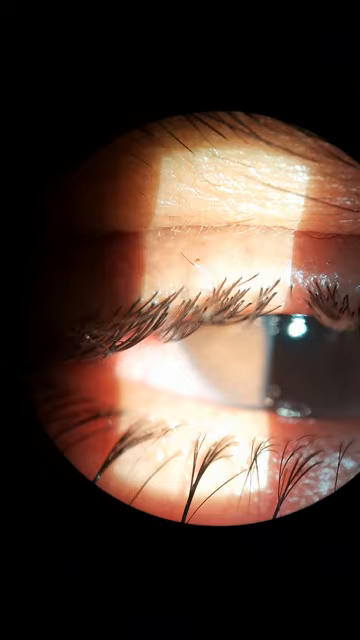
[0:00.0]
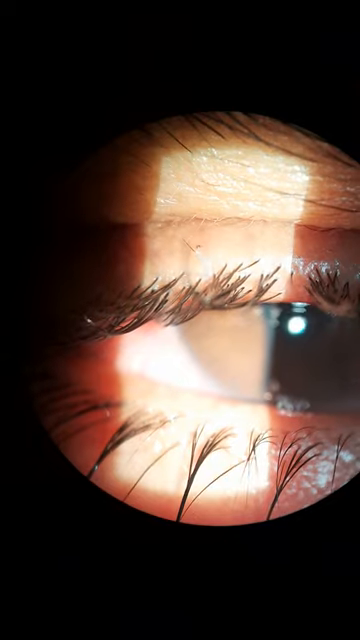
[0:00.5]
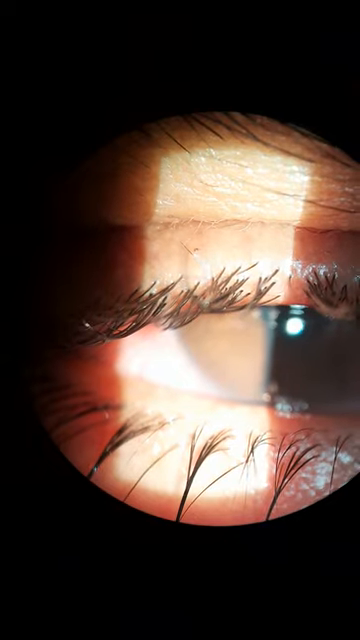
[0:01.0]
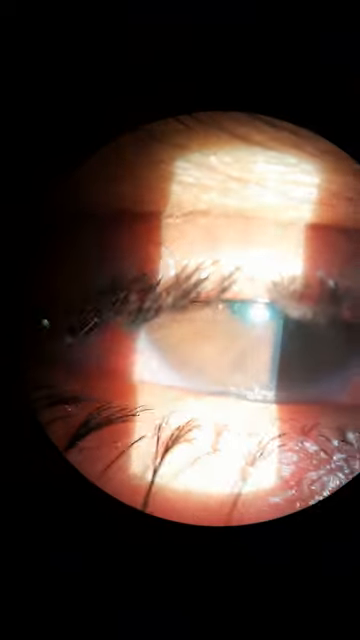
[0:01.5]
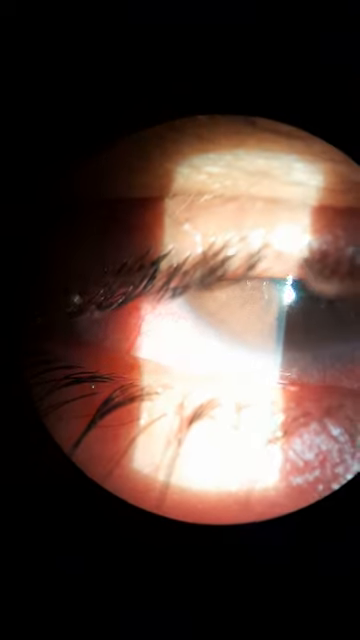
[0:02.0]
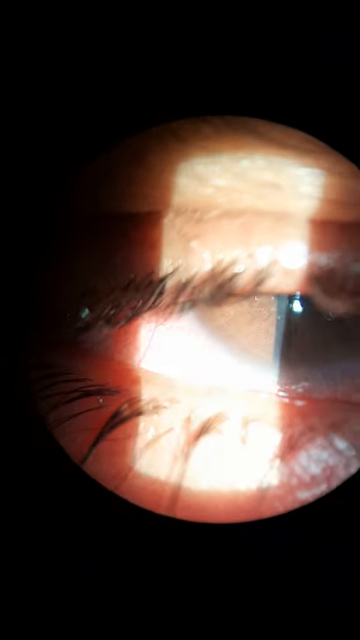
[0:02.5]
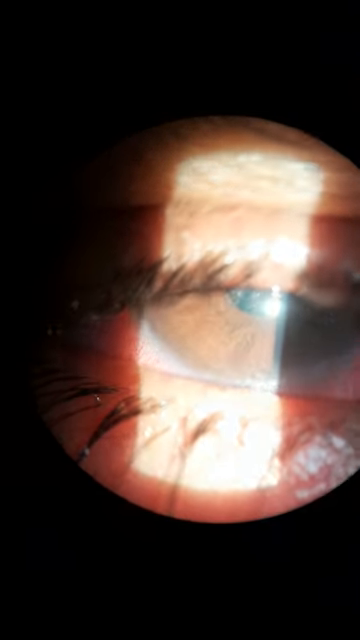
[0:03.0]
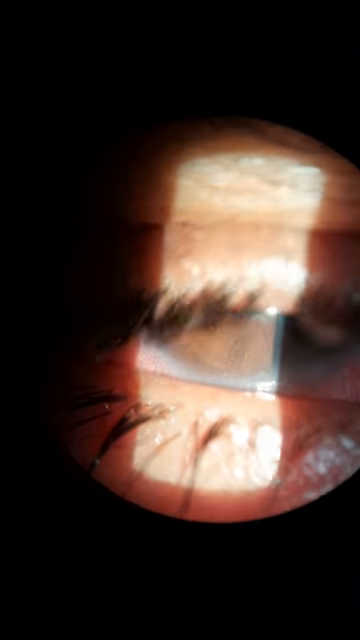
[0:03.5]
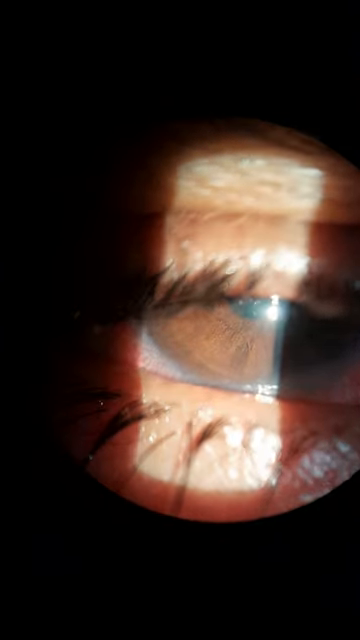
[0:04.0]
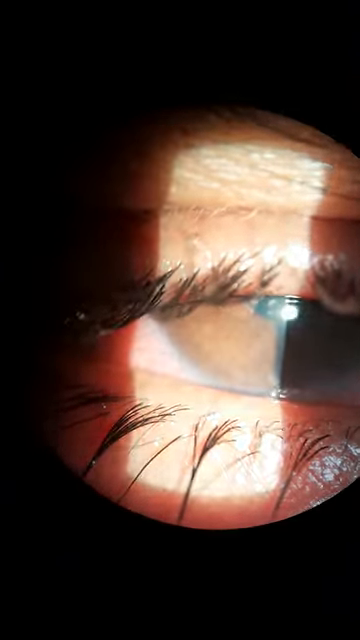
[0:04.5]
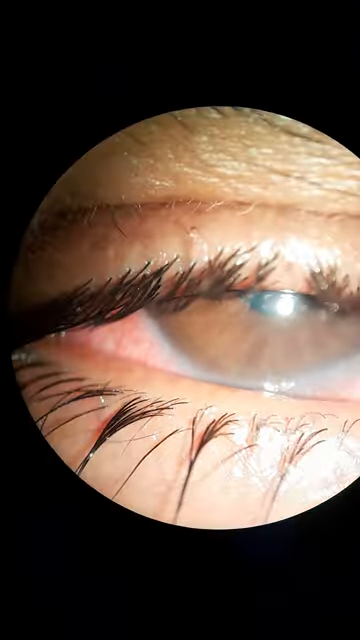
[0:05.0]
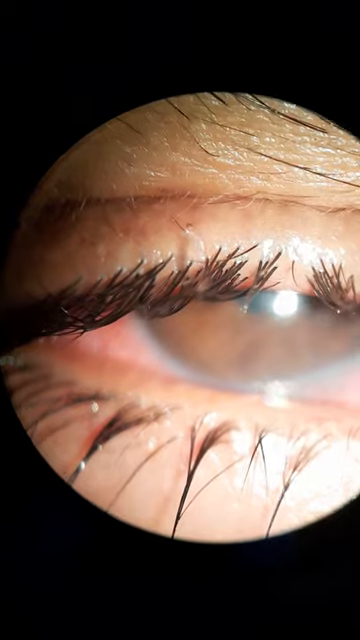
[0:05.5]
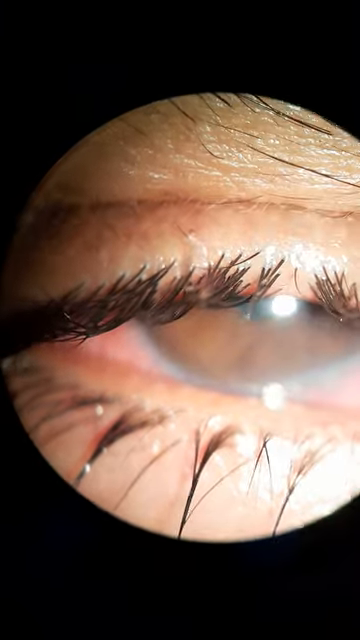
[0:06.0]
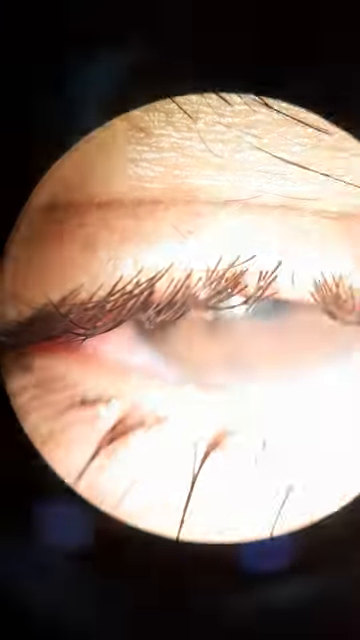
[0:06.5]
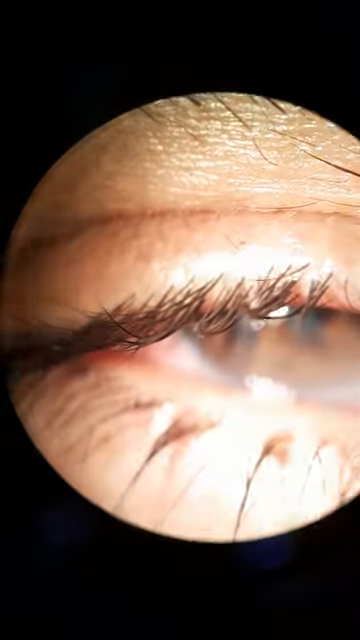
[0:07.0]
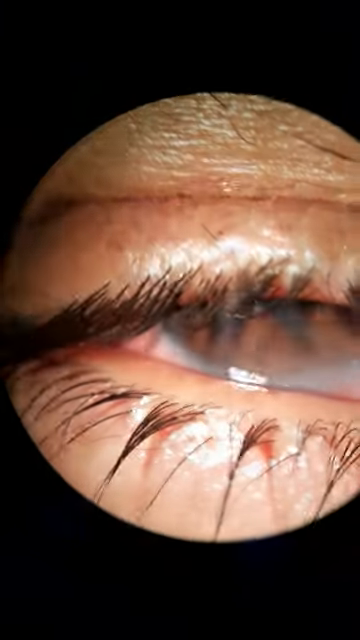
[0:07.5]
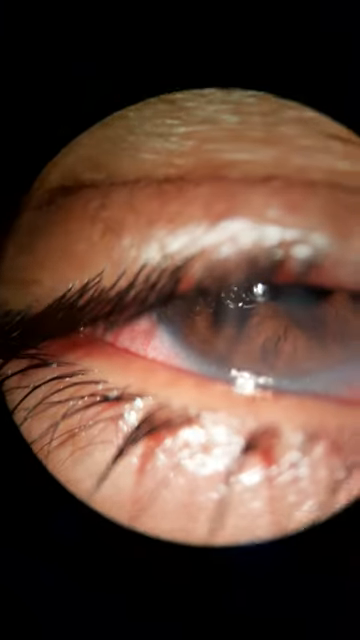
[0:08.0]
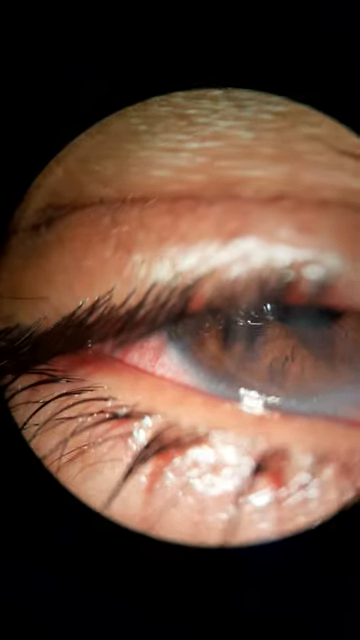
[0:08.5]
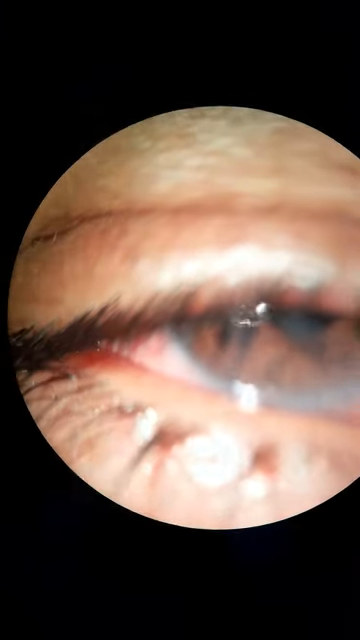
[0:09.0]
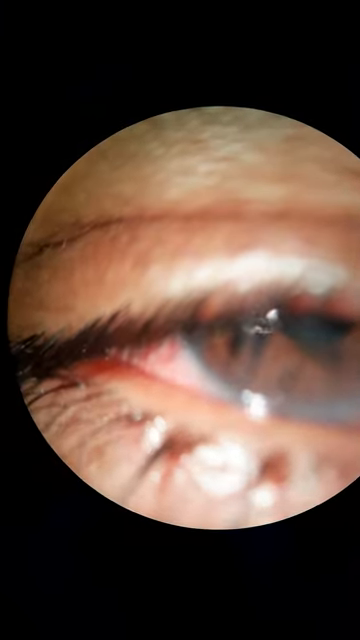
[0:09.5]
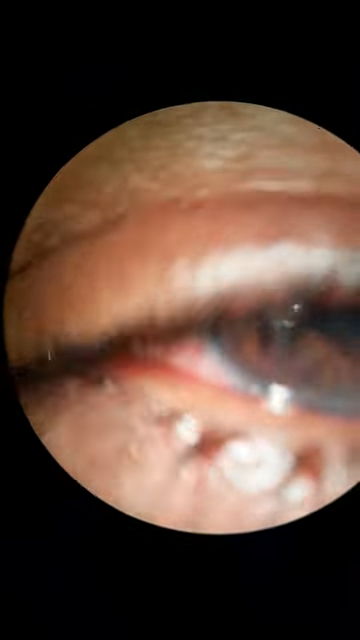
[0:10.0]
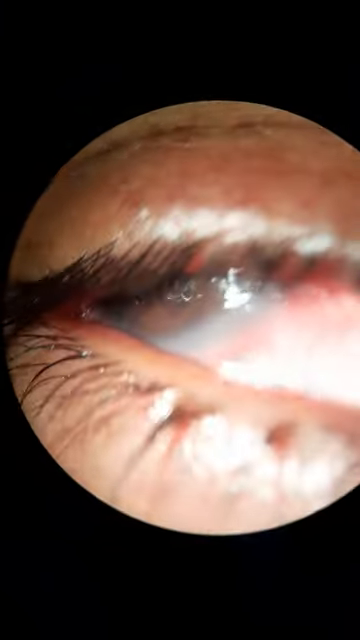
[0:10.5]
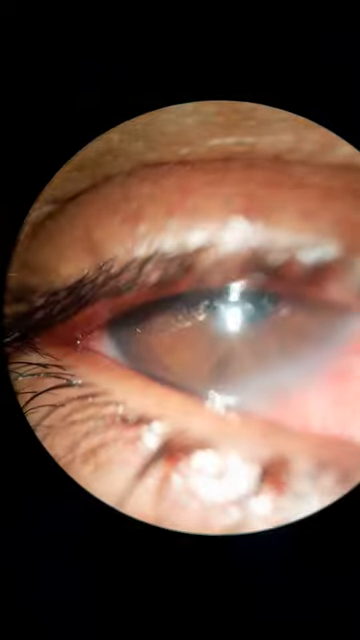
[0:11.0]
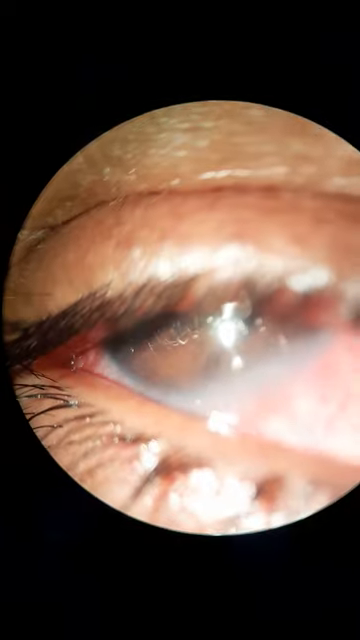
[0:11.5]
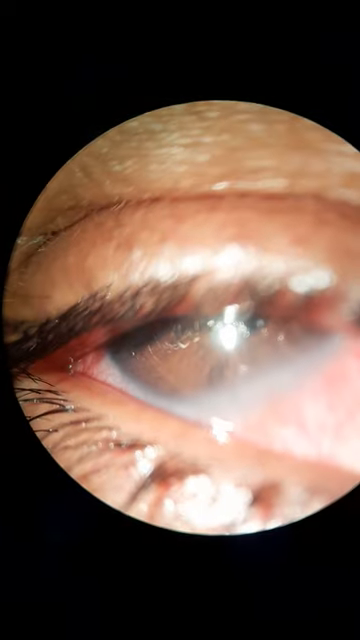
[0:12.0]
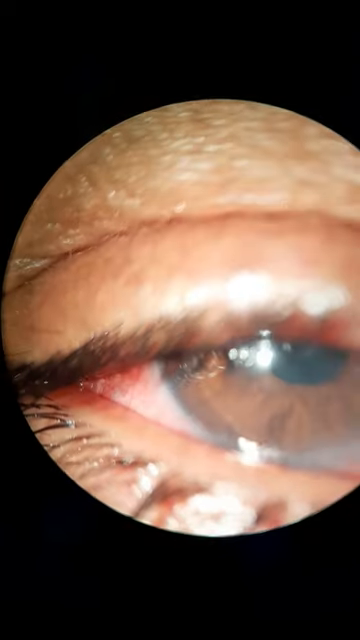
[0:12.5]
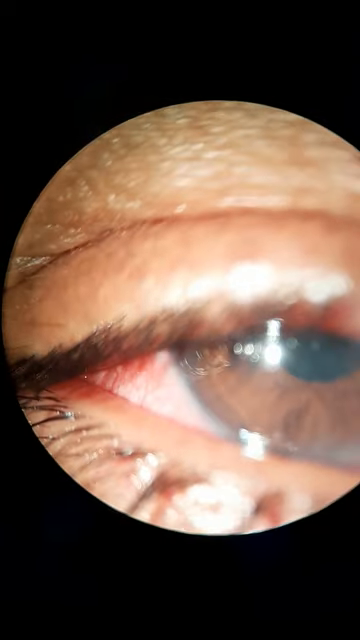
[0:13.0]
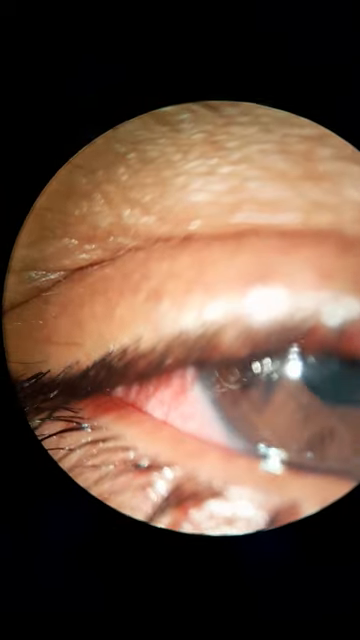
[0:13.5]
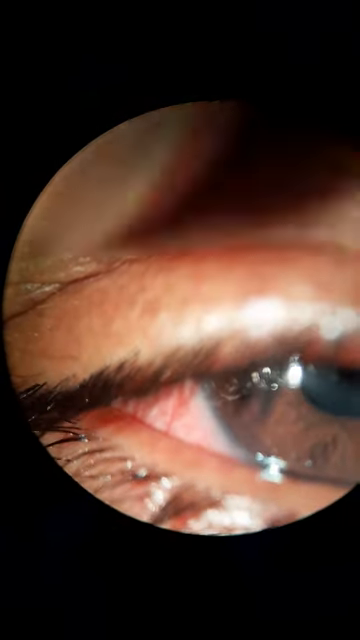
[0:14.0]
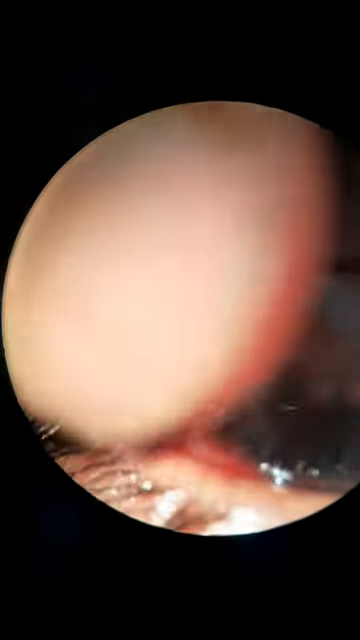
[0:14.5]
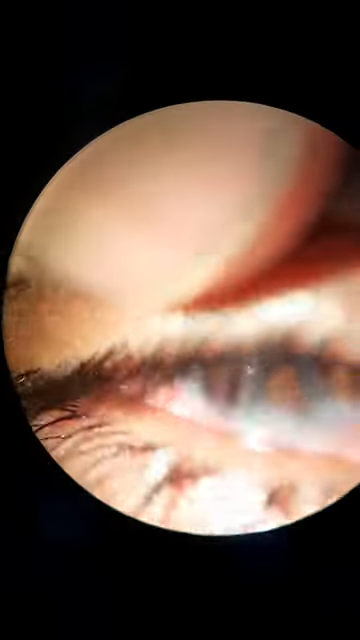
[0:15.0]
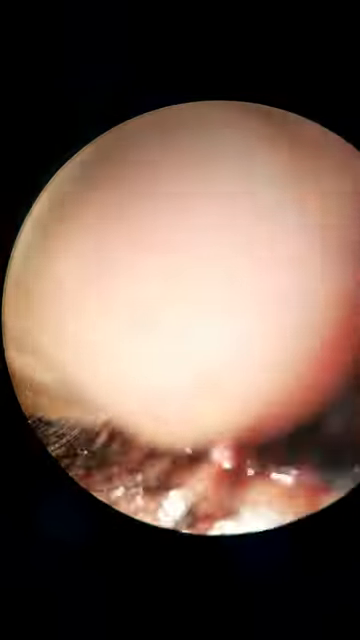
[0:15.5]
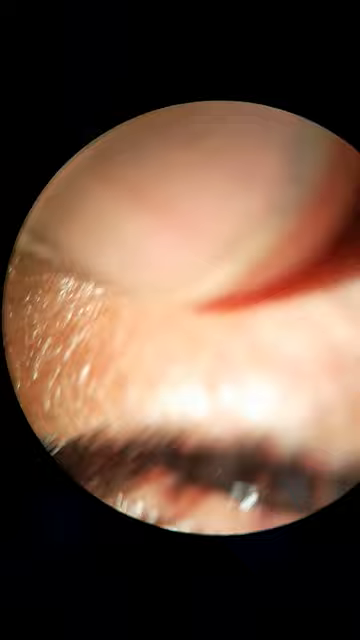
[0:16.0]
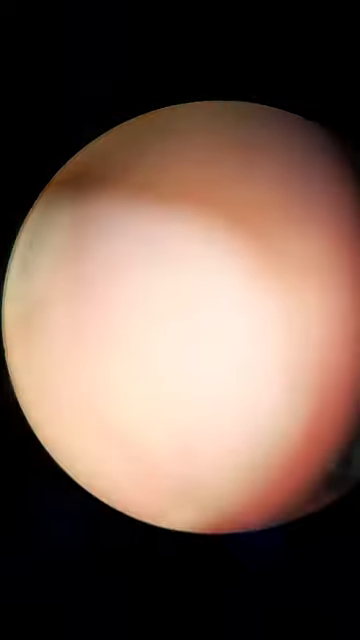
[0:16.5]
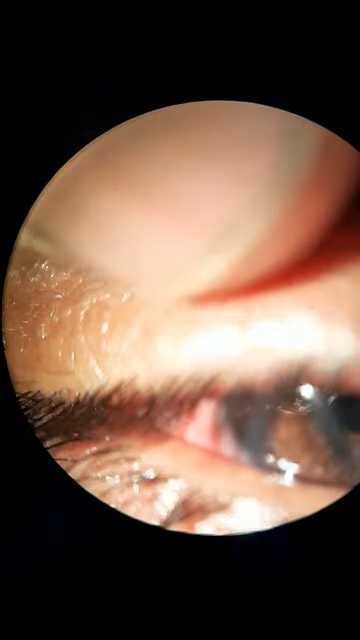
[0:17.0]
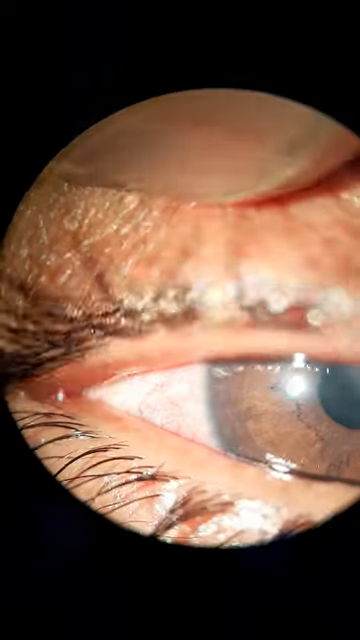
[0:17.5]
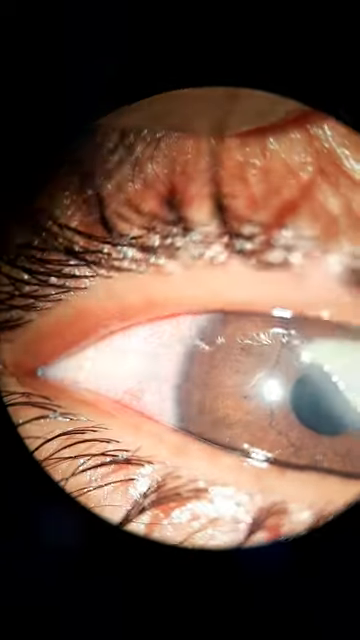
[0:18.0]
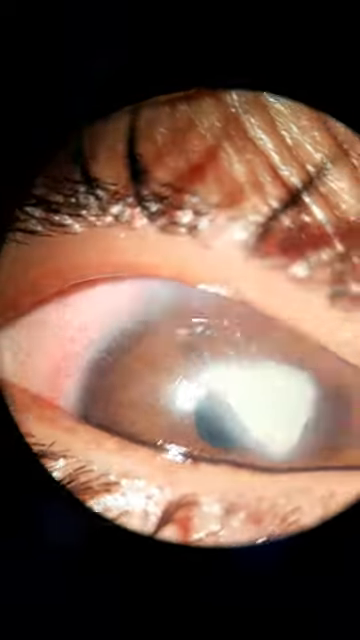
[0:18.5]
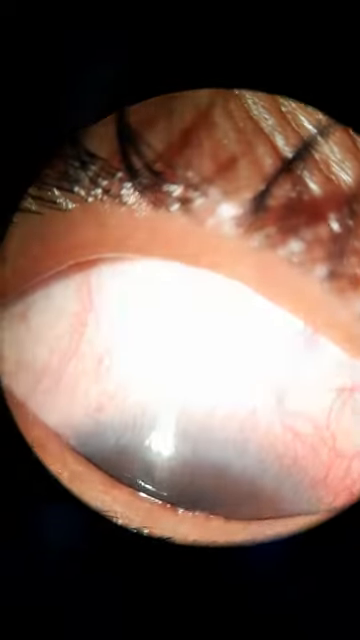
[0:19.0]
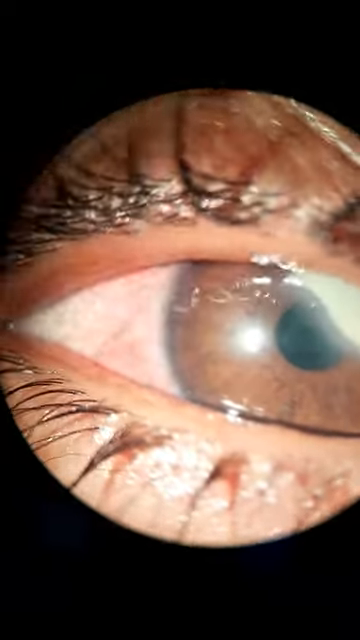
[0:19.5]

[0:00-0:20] A very close-up image of a human eyeball appears. The eye appears to be brown, and the person's eyelashes are visible. The eyes also appear to be somewhat red. A small finger appears to be attempting to pull the eye open to get a better view, and a very bright light is shown into the eye. Only the eyeball, the eyelashes and part of the eyebrow are visible; the eye is framed so that everything else is blacked out. The eye blinks over several seconds. Apparently a procedure or appointment is taking place.